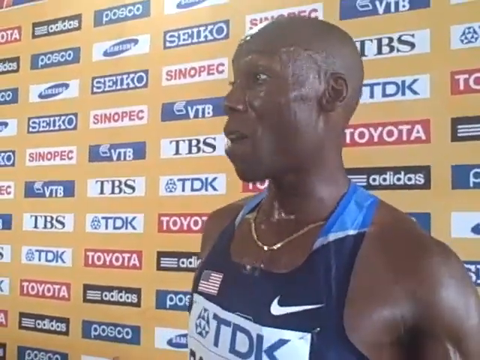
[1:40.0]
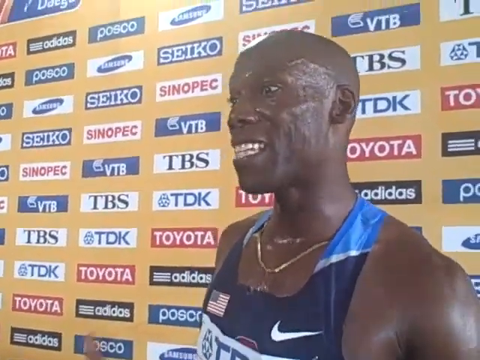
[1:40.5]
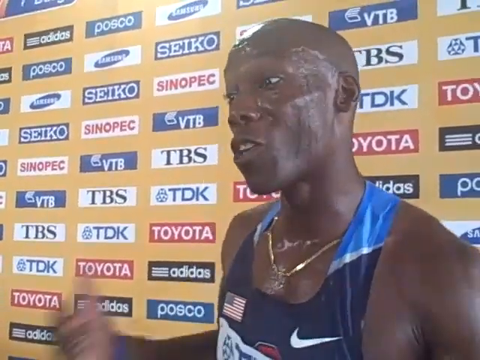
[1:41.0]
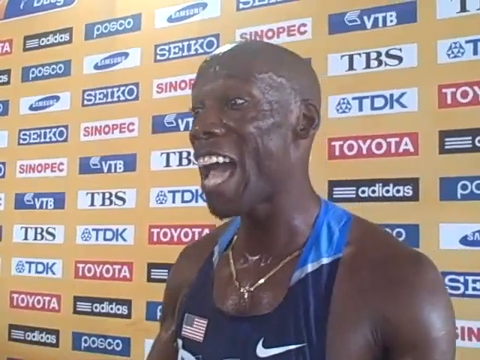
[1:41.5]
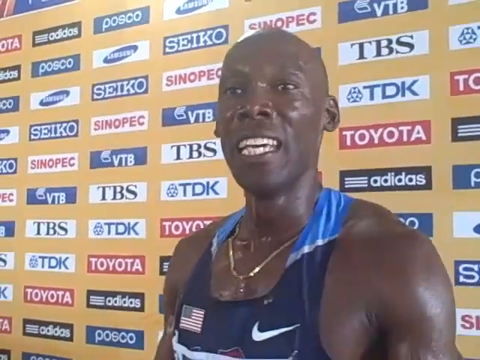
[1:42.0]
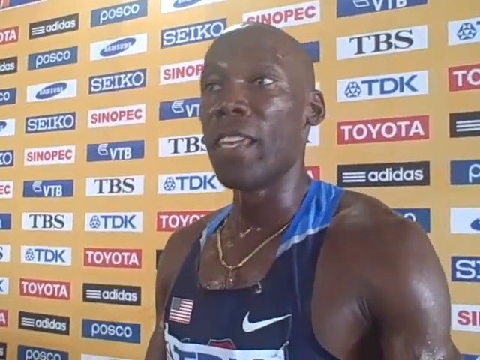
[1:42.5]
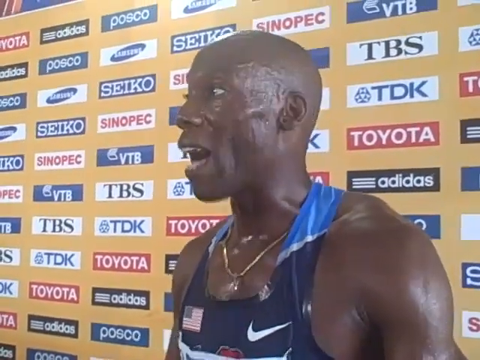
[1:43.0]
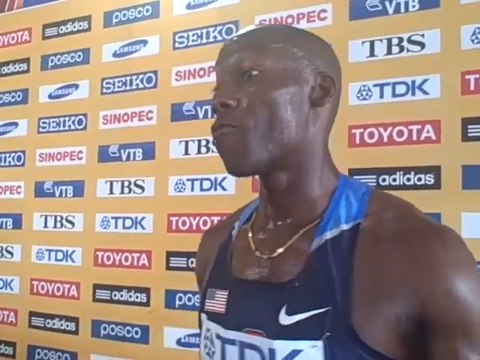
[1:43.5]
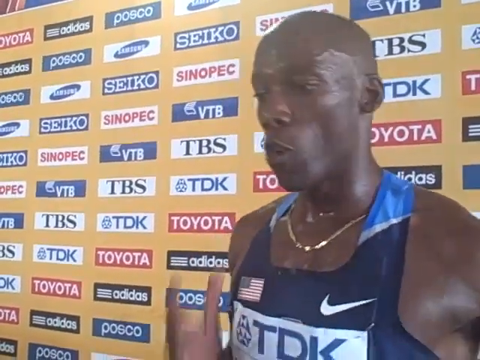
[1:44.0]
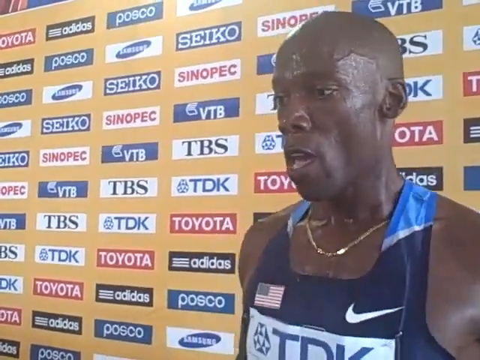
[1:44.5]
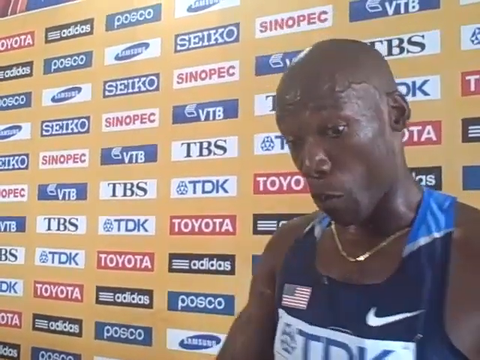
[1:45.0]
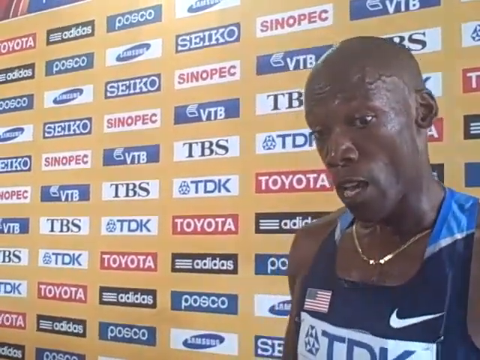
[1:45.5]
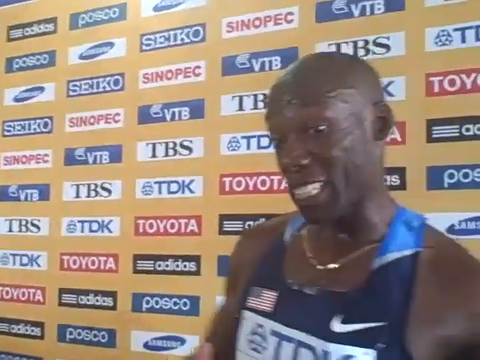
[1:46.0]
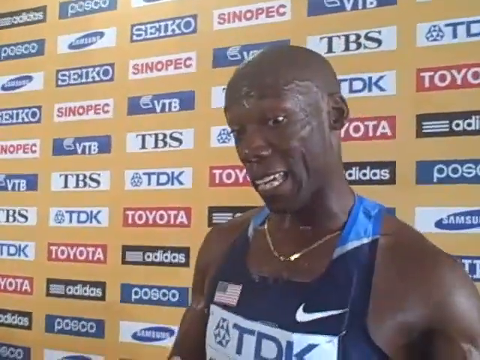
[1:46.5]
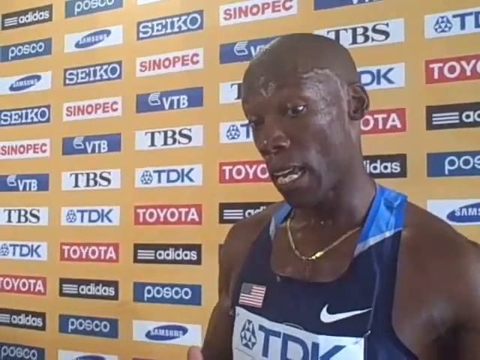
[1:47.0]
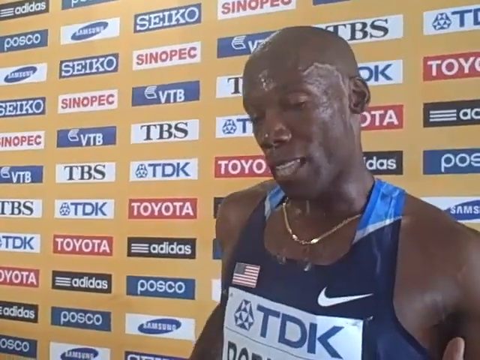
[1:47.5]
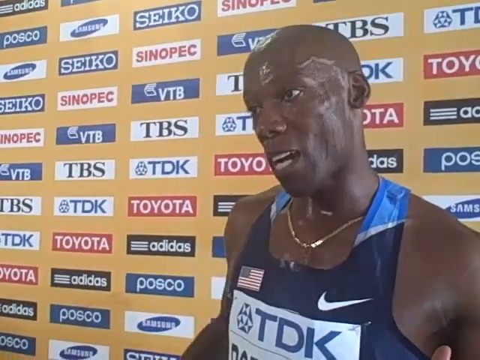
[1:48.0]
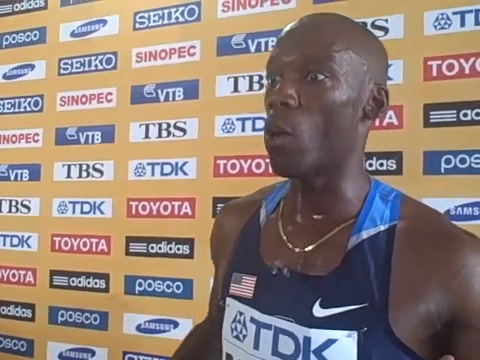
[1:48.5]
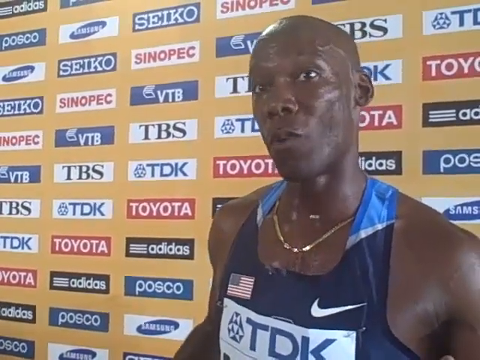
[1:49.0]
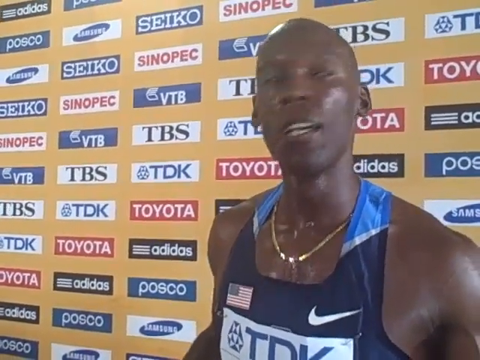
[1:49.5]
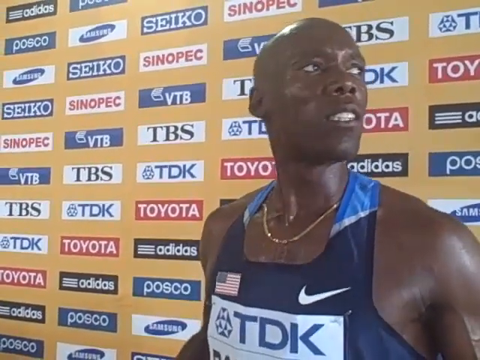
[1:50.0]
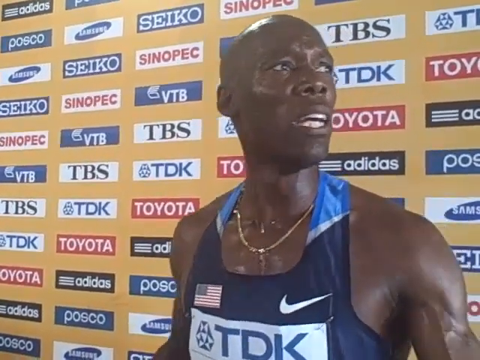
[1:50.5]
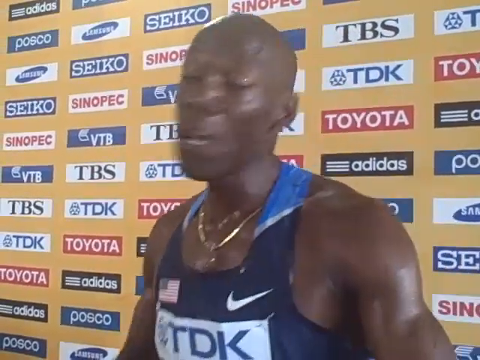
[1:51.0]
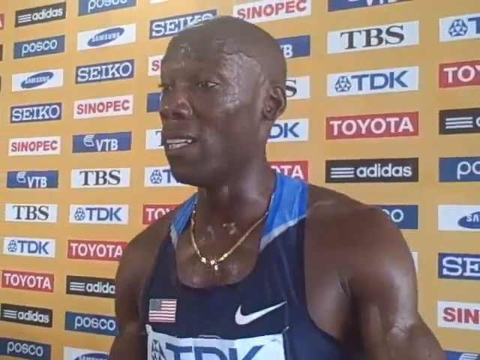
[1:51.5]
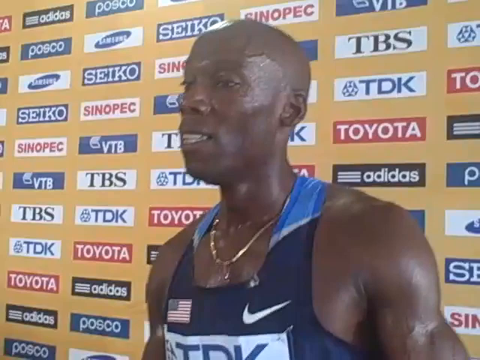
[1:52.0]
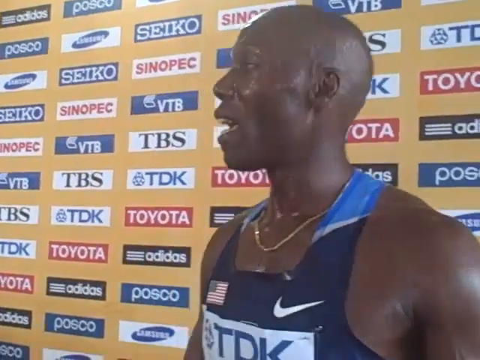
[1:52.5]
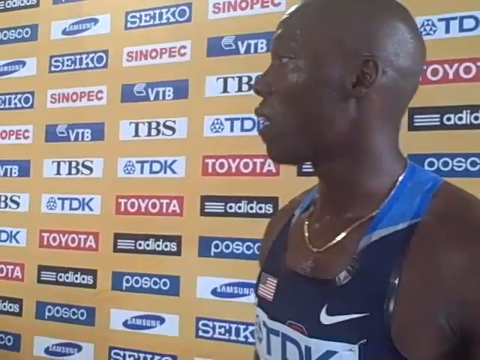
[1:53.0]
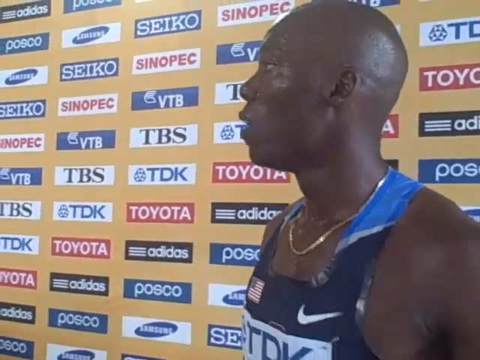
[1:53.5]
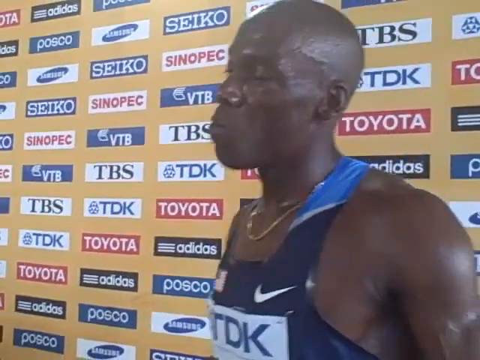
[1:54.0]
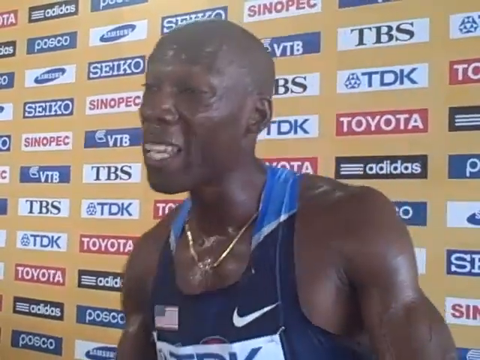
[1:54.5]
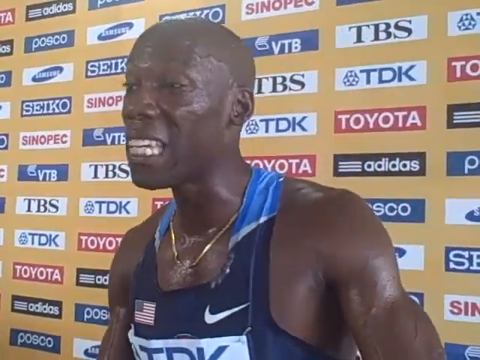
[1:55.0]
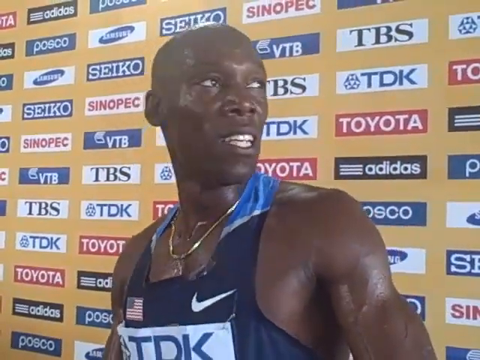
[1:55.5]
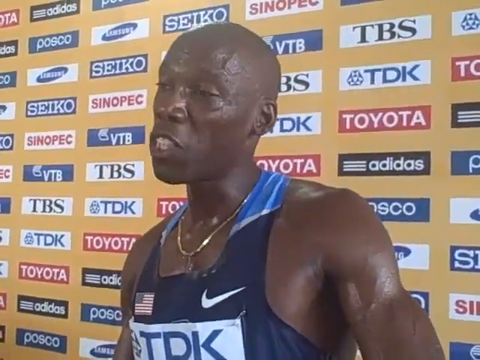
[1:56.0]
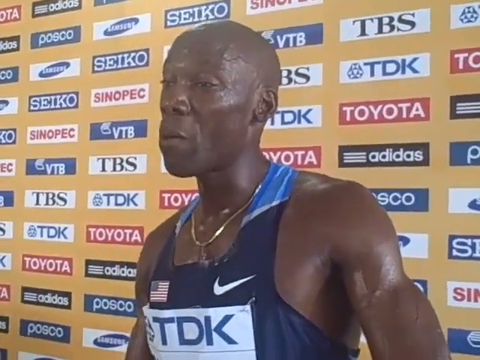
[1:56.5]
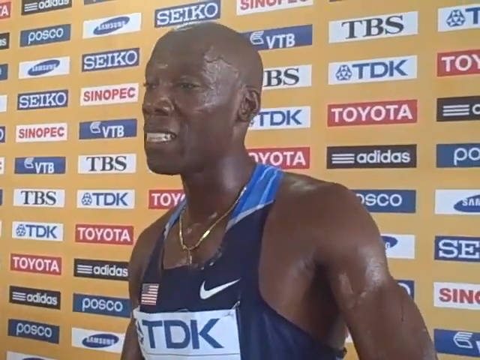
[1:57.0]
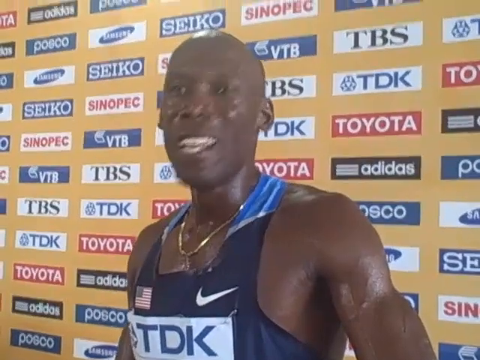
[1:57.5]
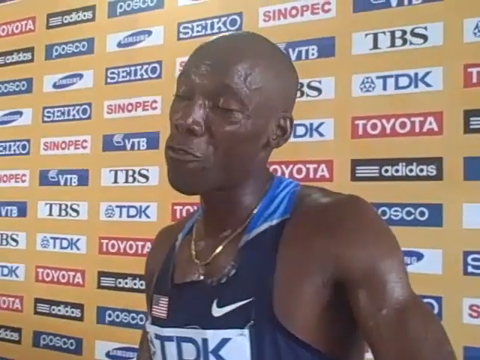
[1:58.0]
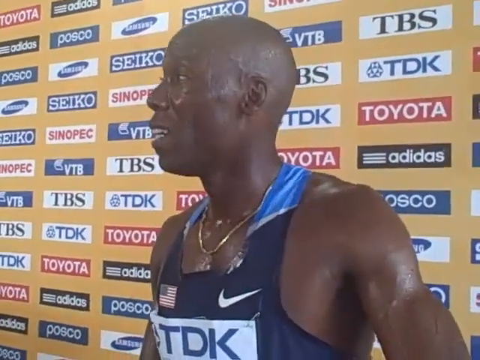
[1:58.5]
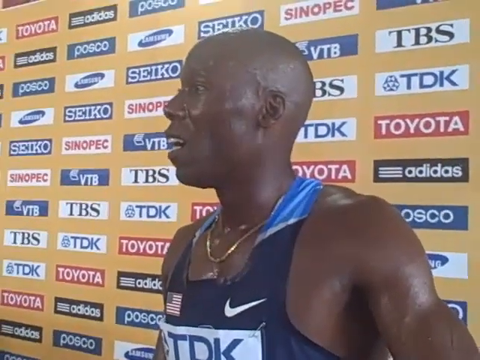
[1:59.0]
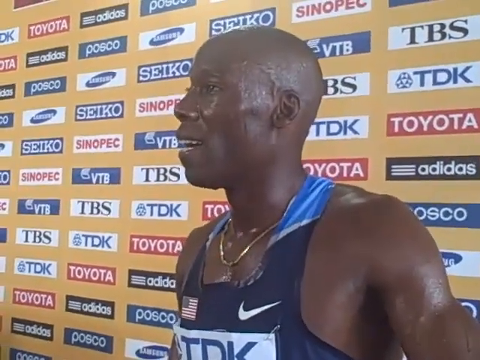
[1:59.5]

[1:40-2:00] He starts off talking with the interviewer, his mouth seeming to open very wide, still panting as he talks. He makes a forward running gesture with his arms, moving them back and forth as if speed walking. With his mouth open very wide, he shakes his head as he talks and looks kind of annoyed. His head seems even more sweaty, and his jersey is clearly quite moist and clinging to his skin. He talks with his eyes and mouth very wide. He briefly pauses and looks towards his left side, looking slightly calmer, but later sort of picks up the pace again, moving his mouth fairly quickly. Near the end his mouth opens quite widely as he talks a lot, and his head quickly moves around. His hands gesture back and forth, palms facing towards him, moving in a circular motion.